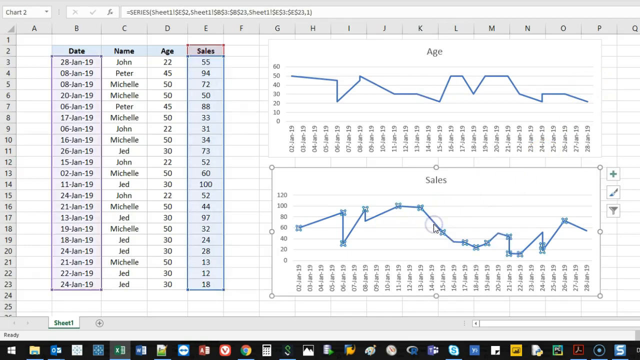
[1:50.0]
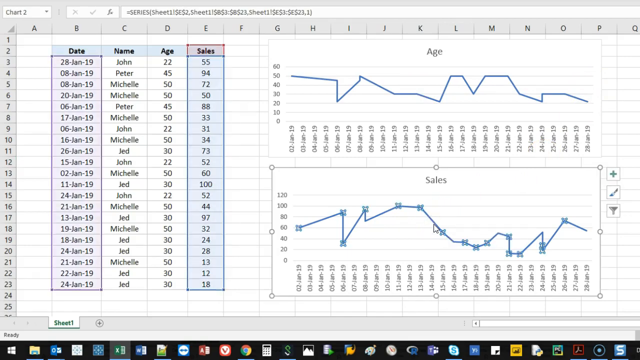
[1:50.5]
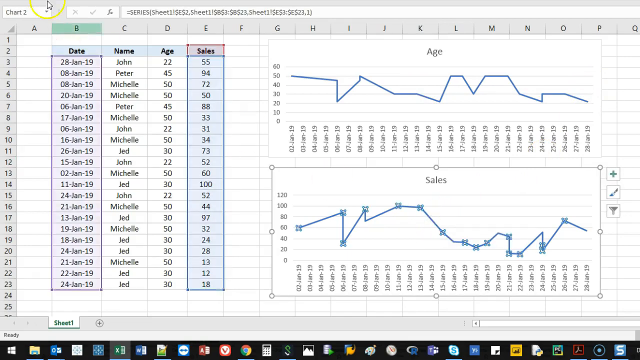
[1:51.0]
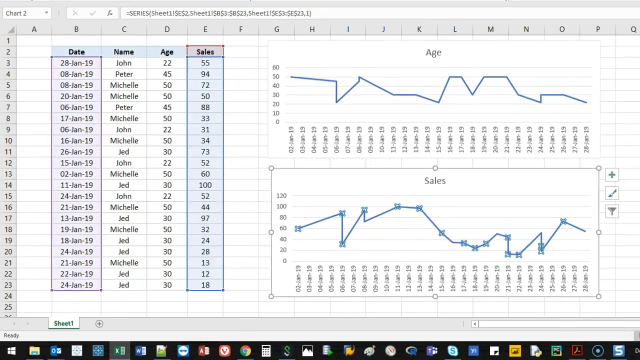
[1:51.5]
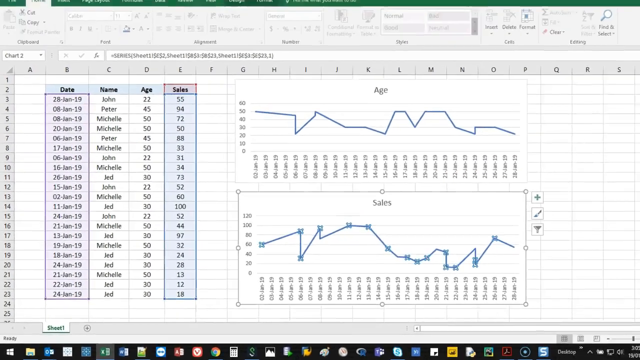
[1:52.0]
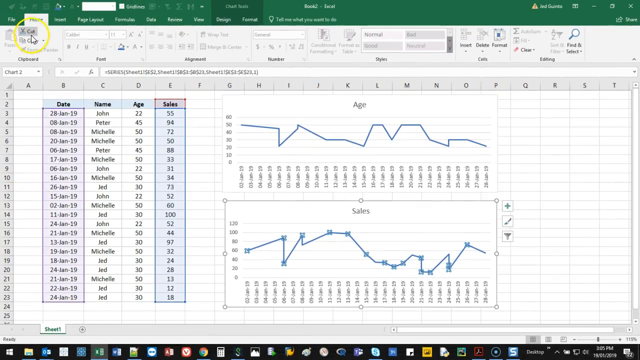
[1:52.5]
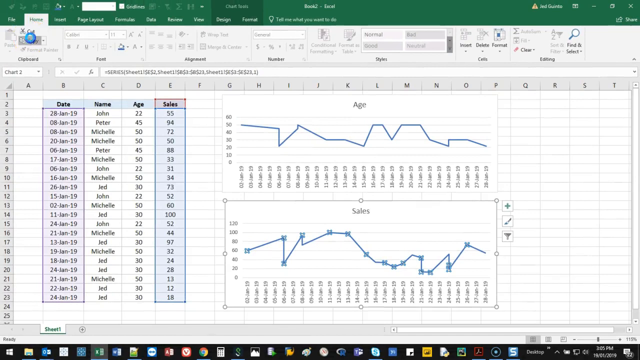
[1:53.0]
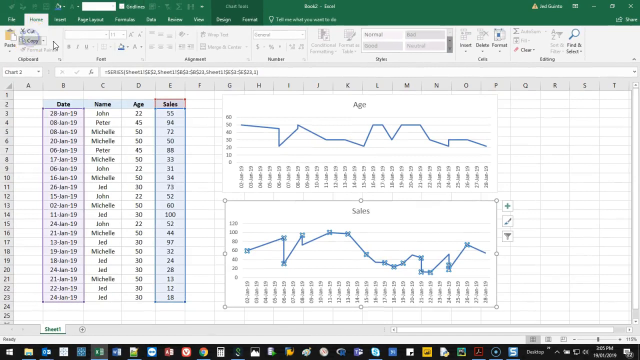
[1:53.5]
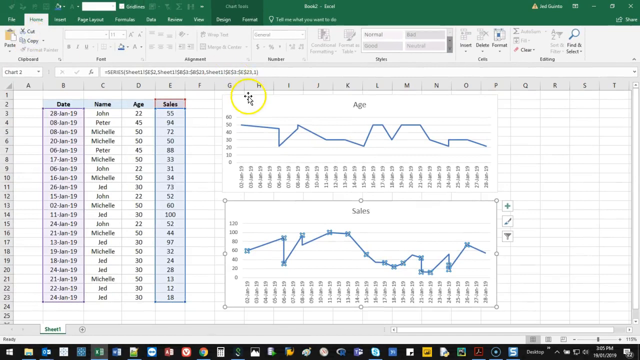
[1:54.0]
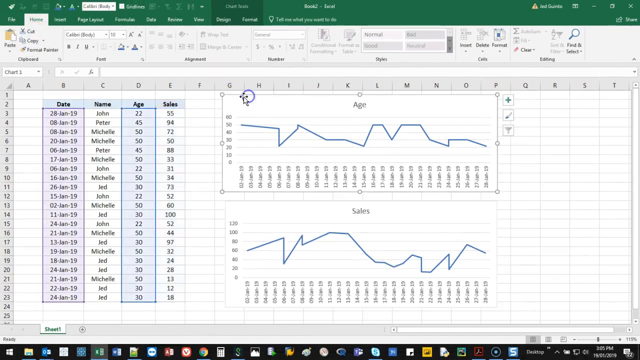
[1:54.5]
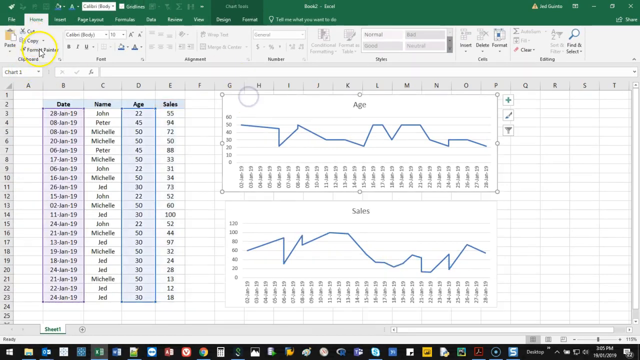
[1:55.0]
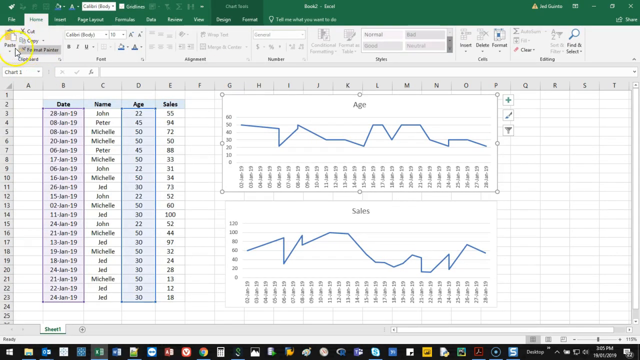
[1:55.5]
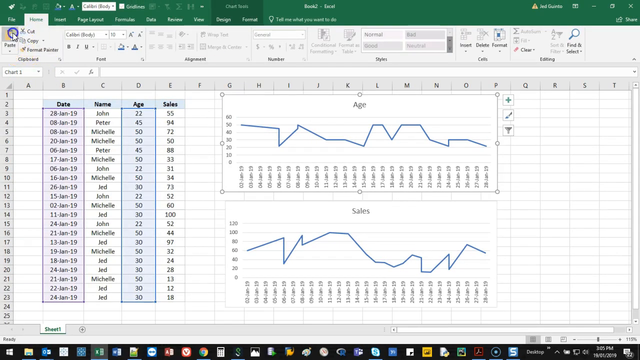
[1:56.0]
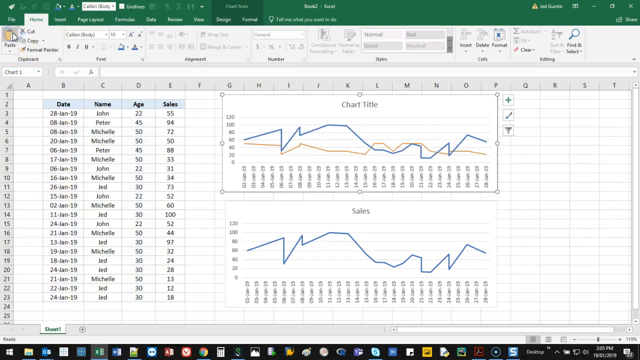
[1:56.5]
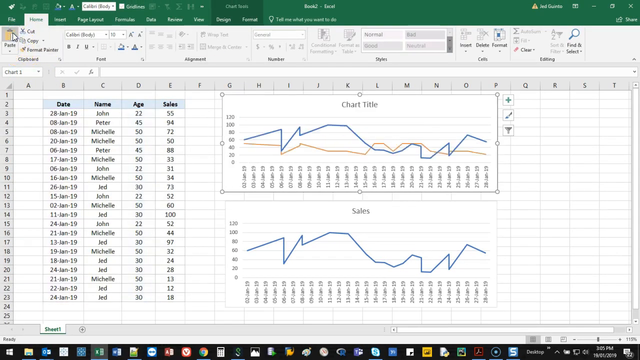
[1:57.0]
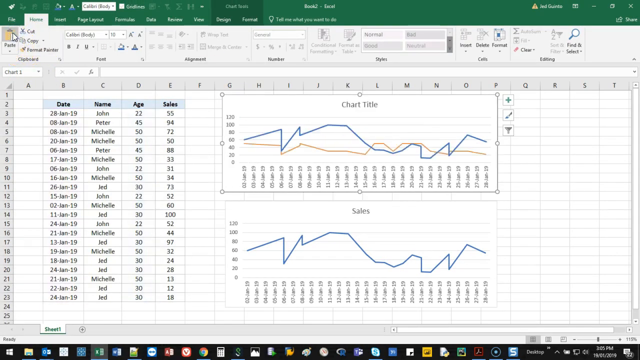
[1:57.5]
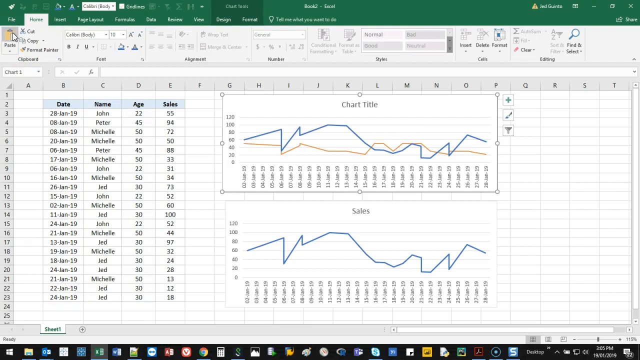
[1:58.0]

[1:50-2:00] An Excel spreadsheet shows columns of data on the left, an age line graph on the right, and a sales line graph underneath it. The sales line graph has small squares at certain points of the line, while the age line graph has a smooth line without any markers. The user adjusts the view so it is zoomed out a little, and the whole window of the spreadsheet is visible. The cursor clicks the copy button on the top left side of the toolbar, then selects the age graph, then hits the paste button on the left side of the toolbar. Another chart is overlaid on top of the age line chart; it has the title "chart title" and a blue and a yellow line.